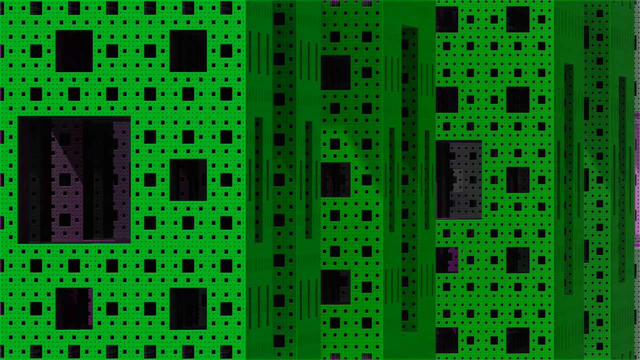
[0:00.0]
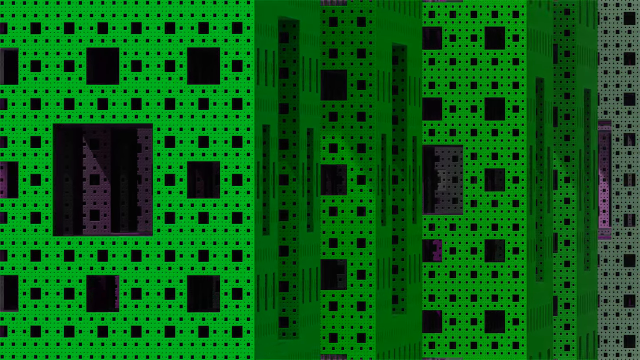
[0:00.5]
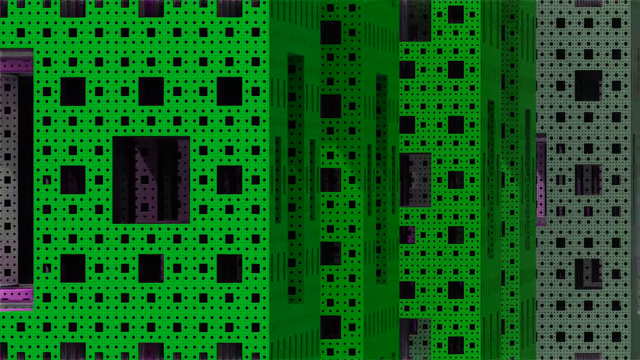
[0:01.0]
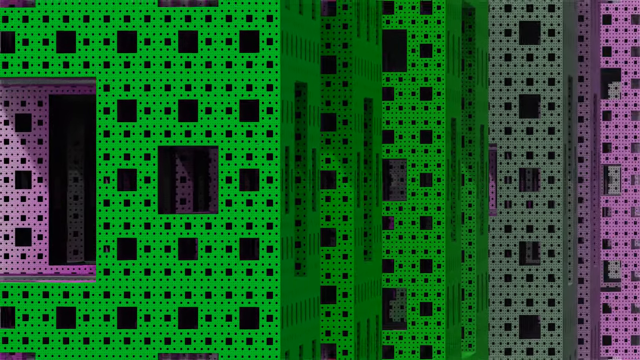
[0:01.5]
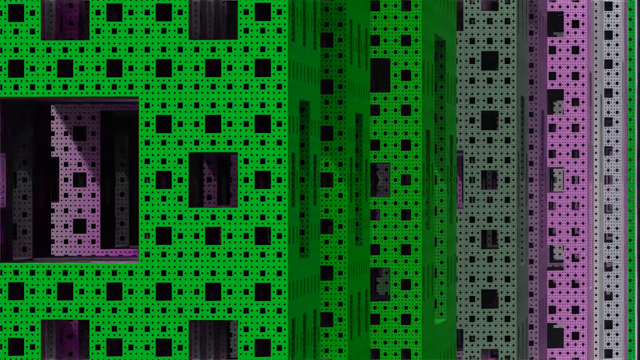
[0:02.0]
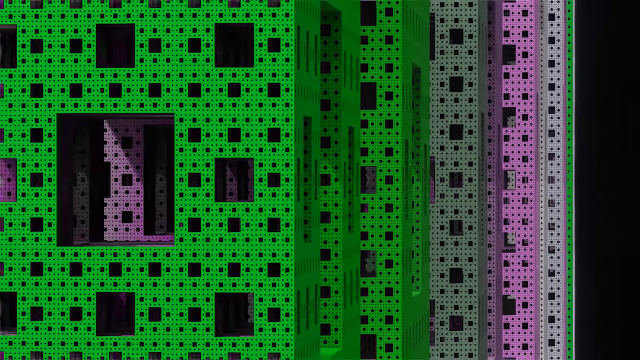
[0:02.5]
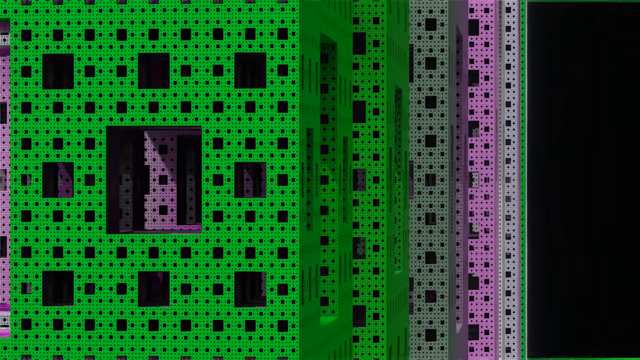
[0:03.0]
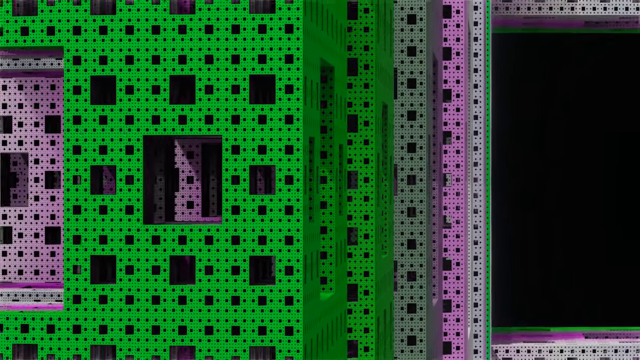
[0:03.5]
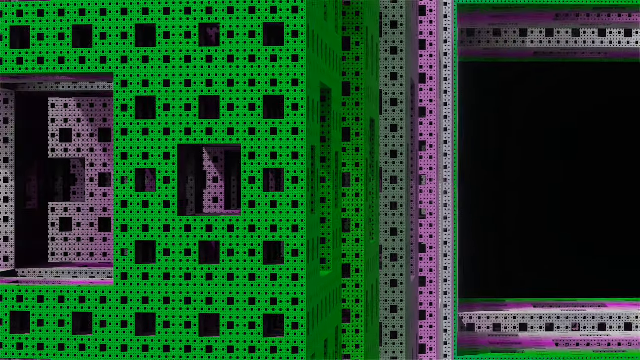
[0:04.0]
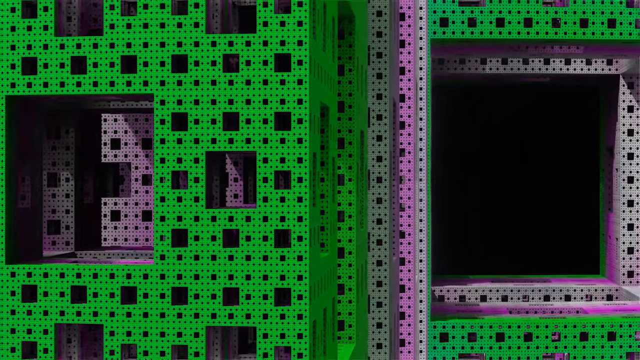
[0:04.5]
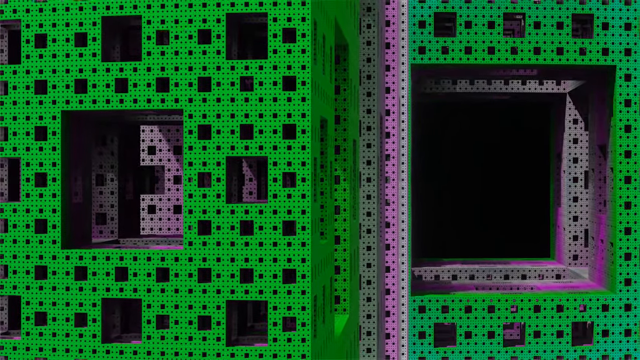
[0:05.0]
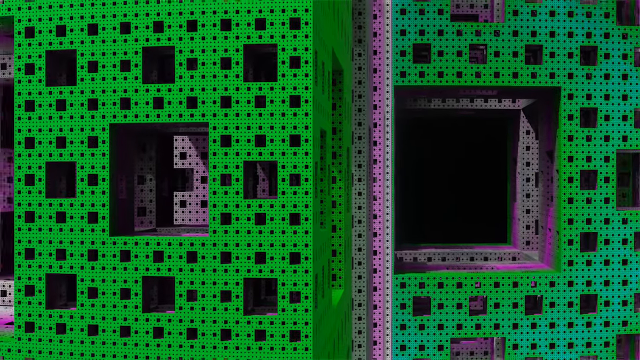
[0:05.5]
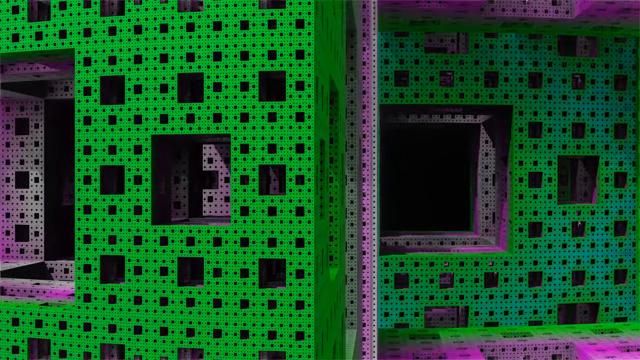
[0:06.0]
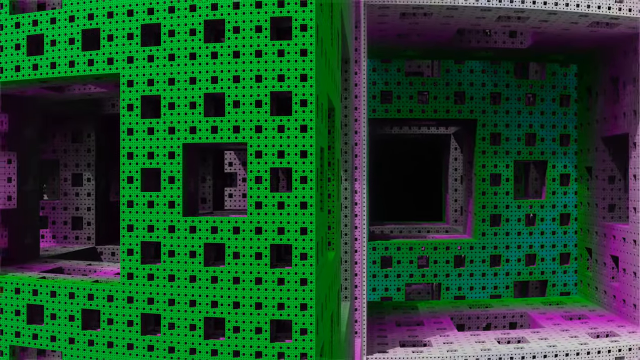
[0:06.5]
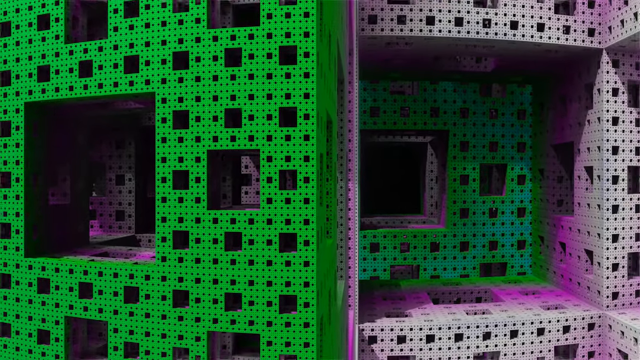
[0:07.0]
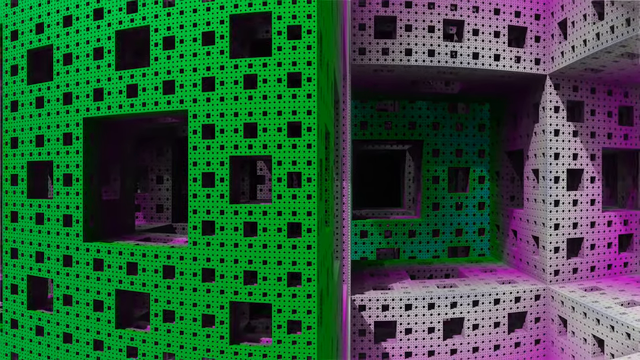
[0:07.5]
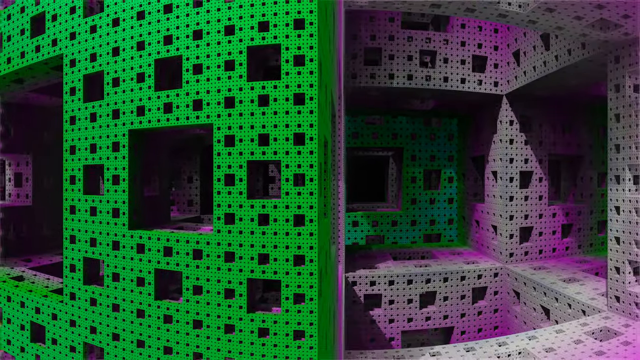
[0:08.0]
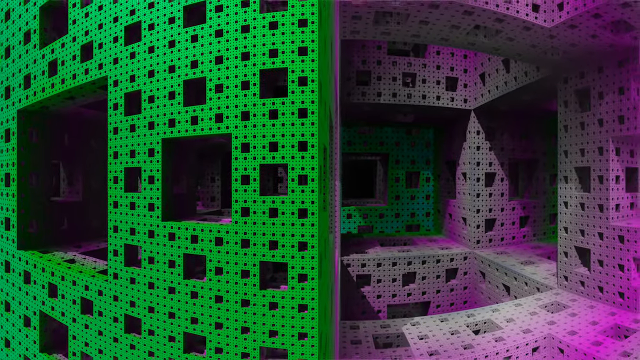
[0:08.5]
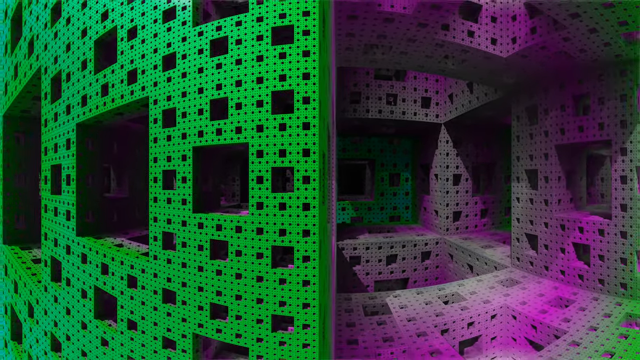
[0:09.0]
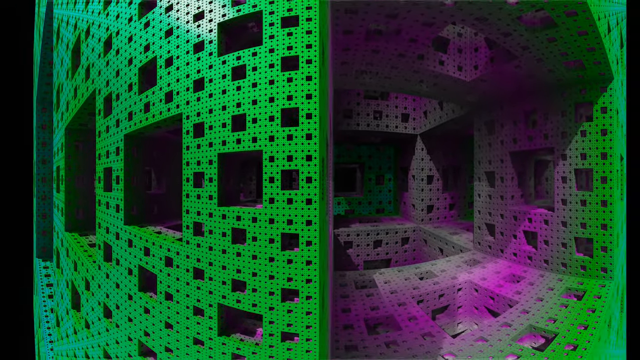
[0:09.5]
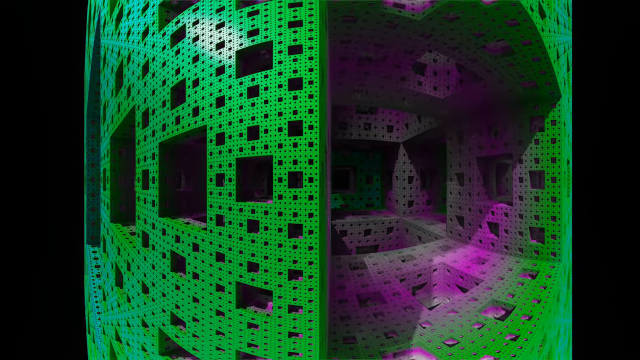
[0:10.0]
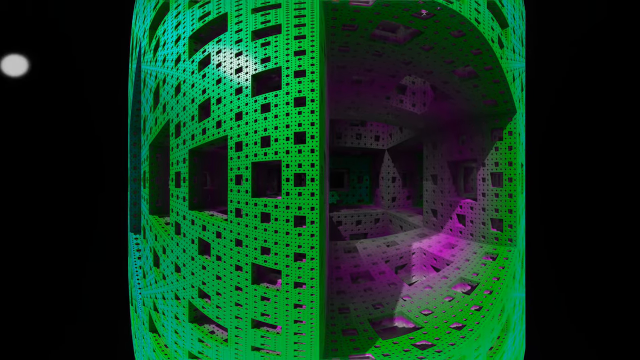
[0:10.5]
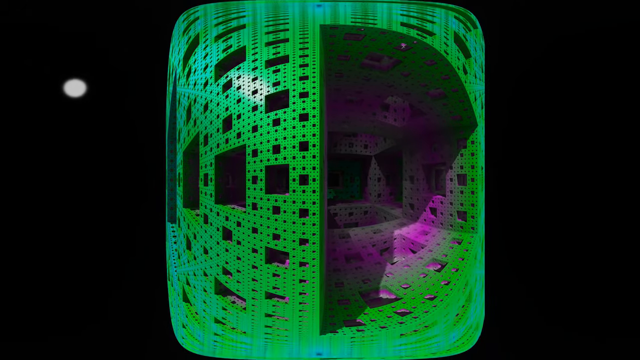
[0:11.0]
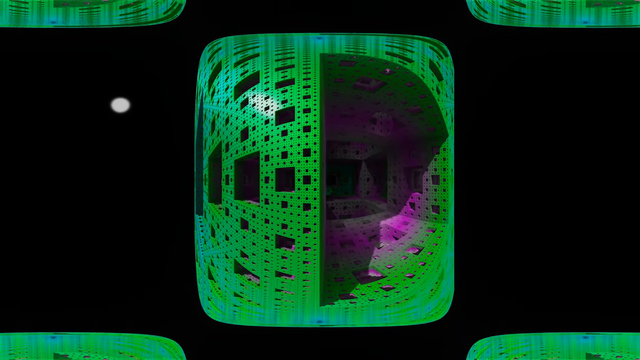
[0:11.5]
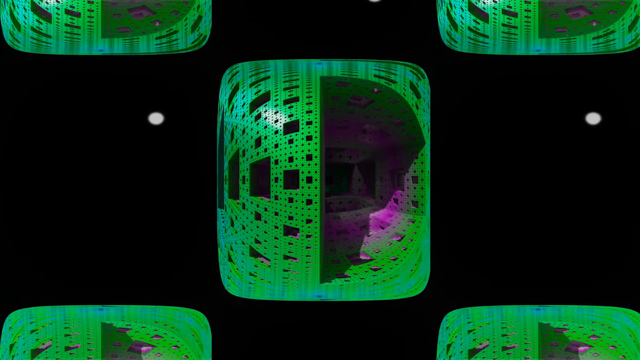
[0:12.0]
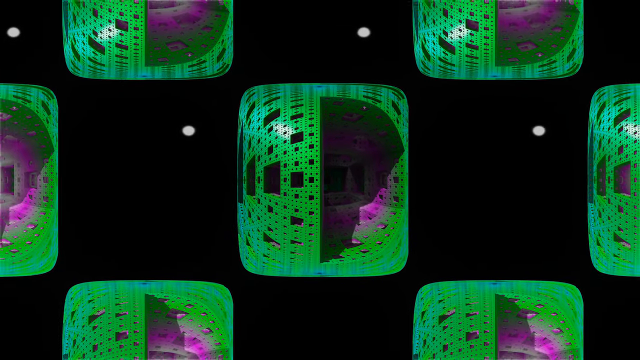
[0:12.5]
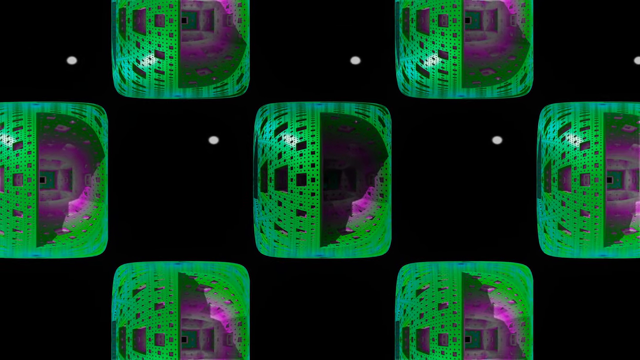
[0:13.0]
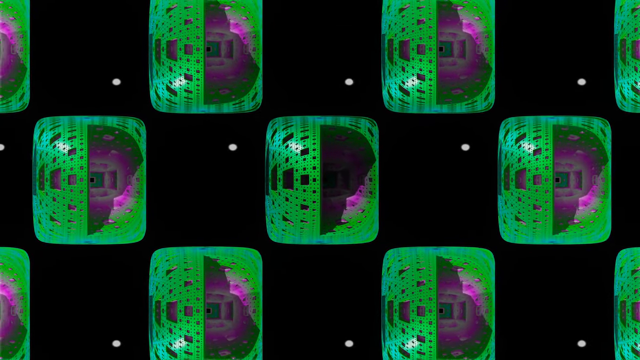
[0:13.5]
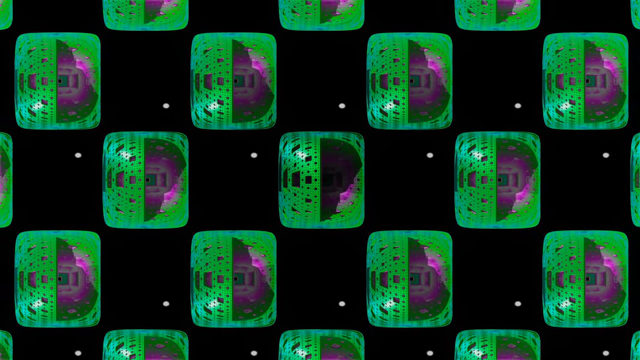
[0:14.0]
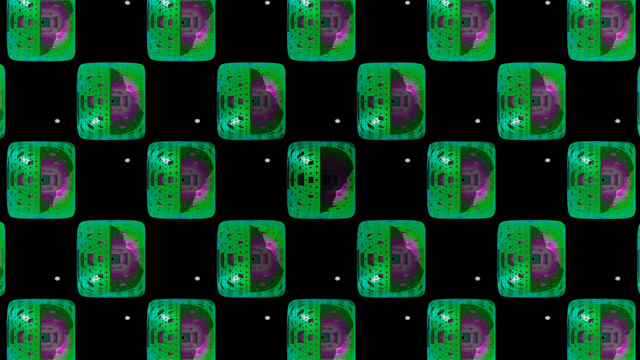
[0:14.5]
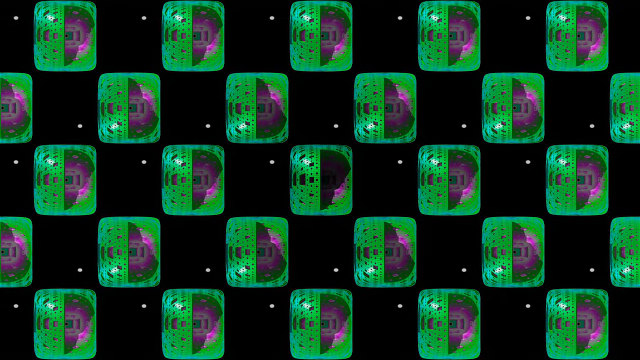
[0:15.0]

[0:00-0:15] A digital rendering of some sort fills the view in a very bright green grid style: a series of larger and smaller squares along with a series of holes, as though the squares have been cut into a kind of pegboard. As the video begins, the view phases out and widens to reveal more of the pegboard, and as it does, the colors change along with the squares and their positioning, almost like a multiverse of squares. The view keeps phasing out as the squares become larger, with a sort of collapsing into different squares. The squares being left behind become dark and then go black, and as it phases out, more and more collections of squares appear with their centers going black as well. The main coloring is the bright green, but as it phases, the squares behind show shades of pink, gray and more green. As things turn black, some of the pink fades from pink to gray to green, and this repeats. The view then settles on a screen with a pattern of boxes in rows with gaps of black in between, as though the squares are all part of a larger square. This final arrangement of multiple squares has four rows of squares.